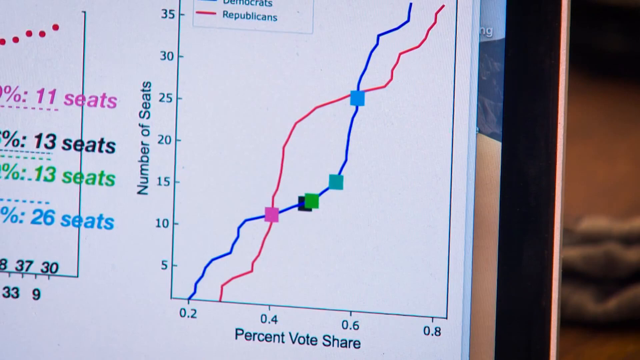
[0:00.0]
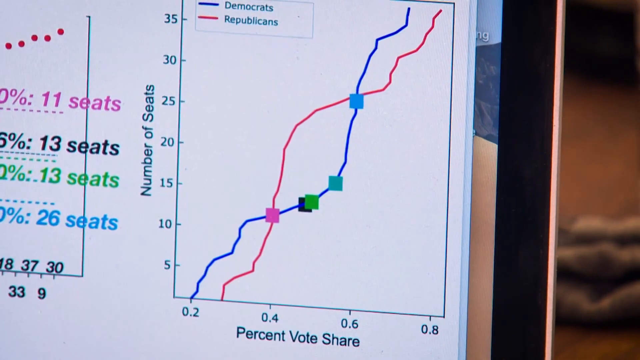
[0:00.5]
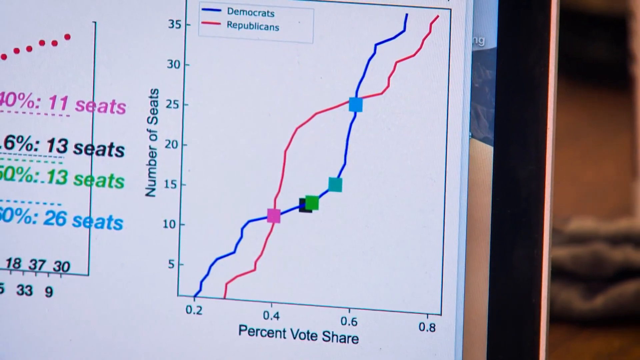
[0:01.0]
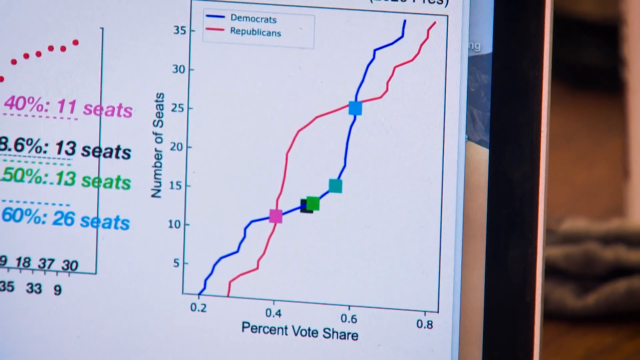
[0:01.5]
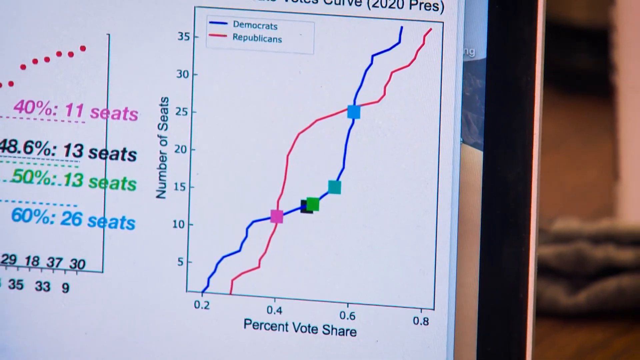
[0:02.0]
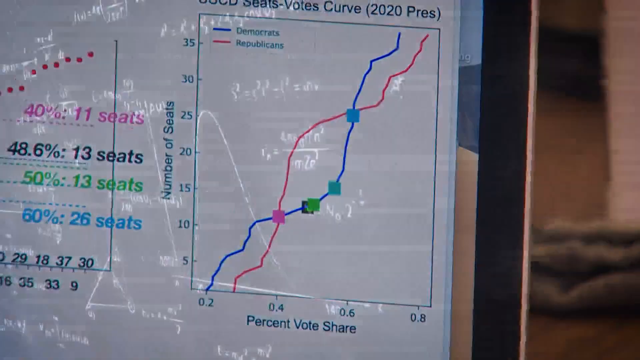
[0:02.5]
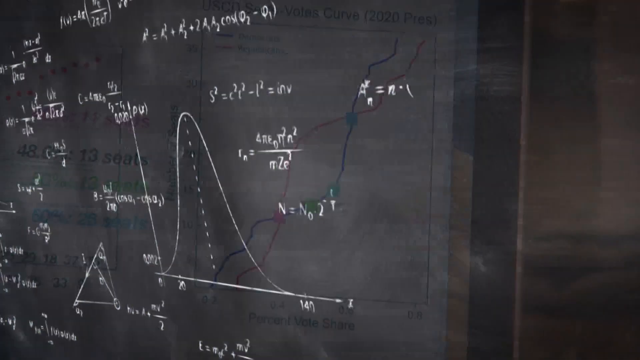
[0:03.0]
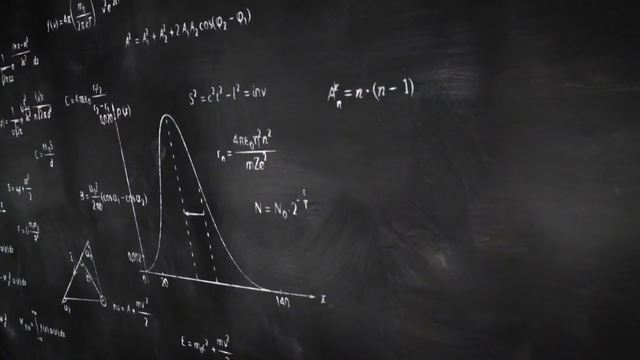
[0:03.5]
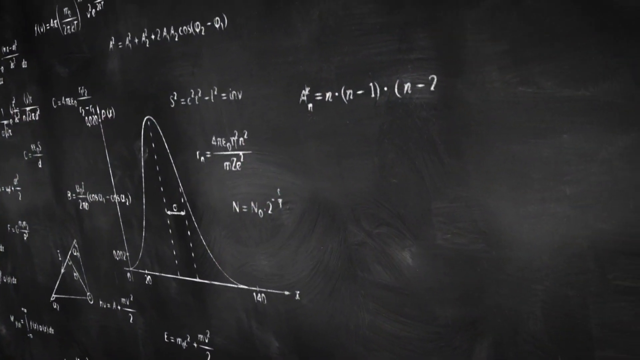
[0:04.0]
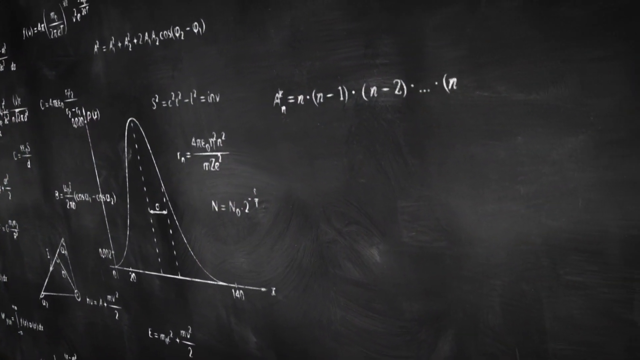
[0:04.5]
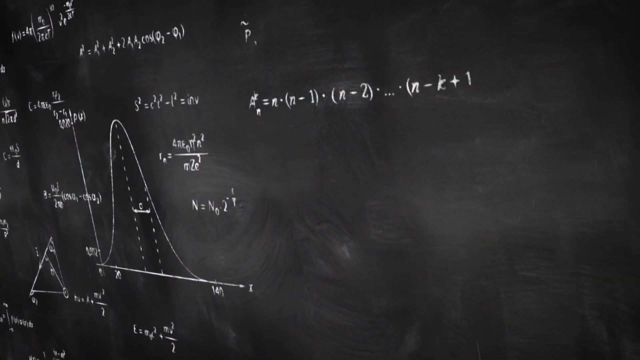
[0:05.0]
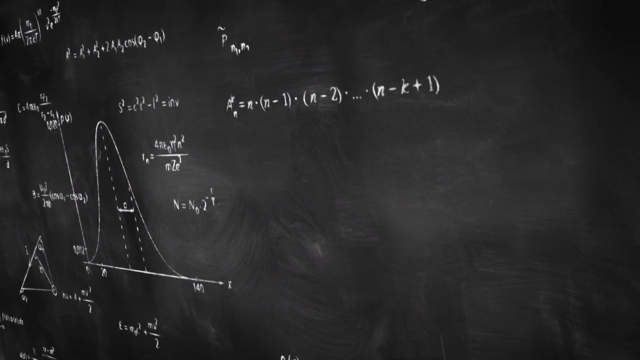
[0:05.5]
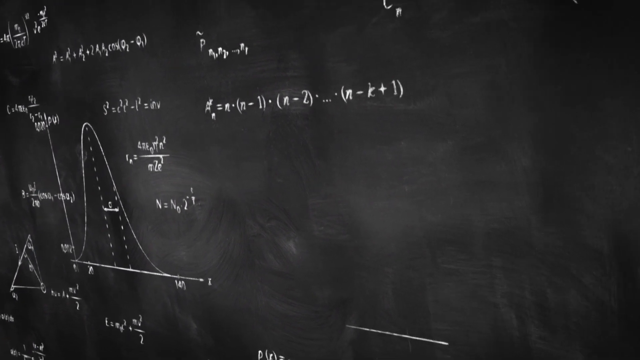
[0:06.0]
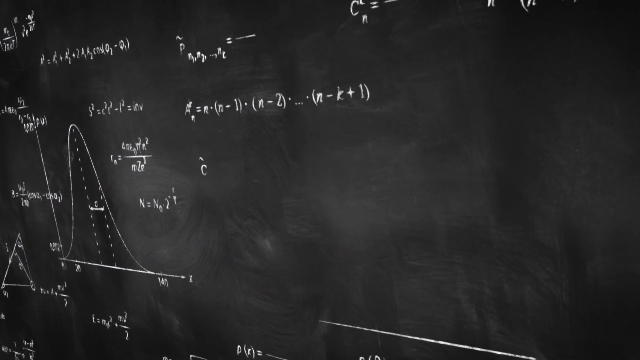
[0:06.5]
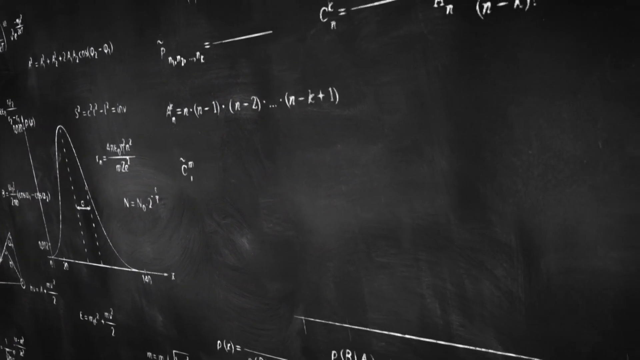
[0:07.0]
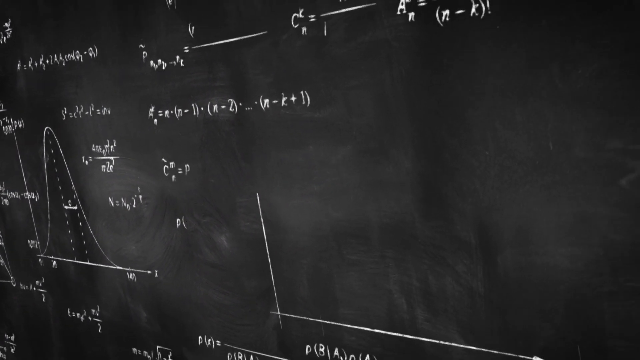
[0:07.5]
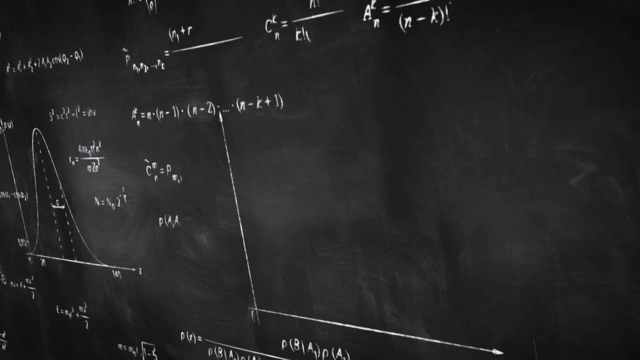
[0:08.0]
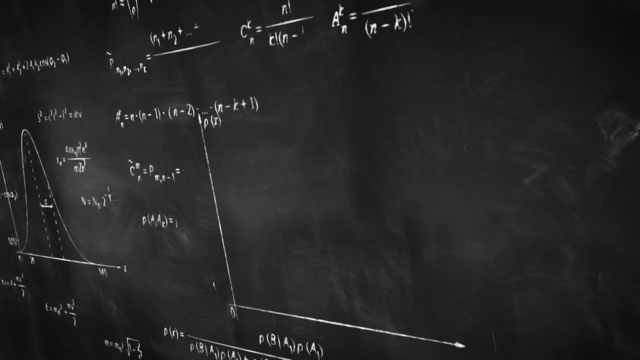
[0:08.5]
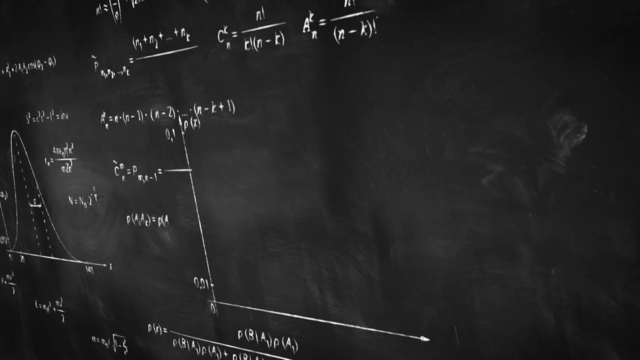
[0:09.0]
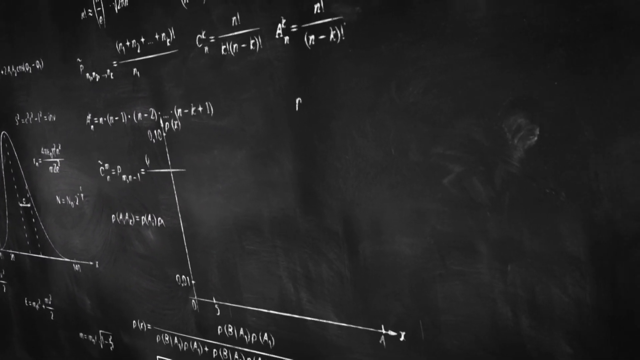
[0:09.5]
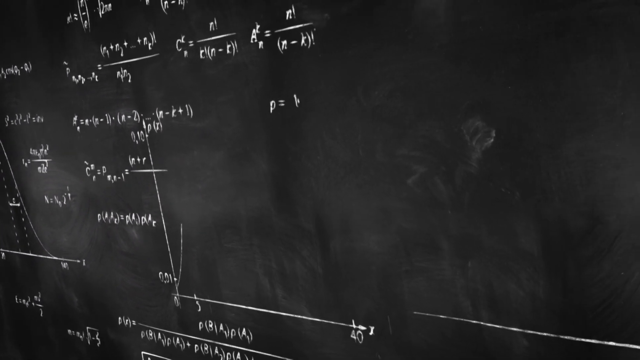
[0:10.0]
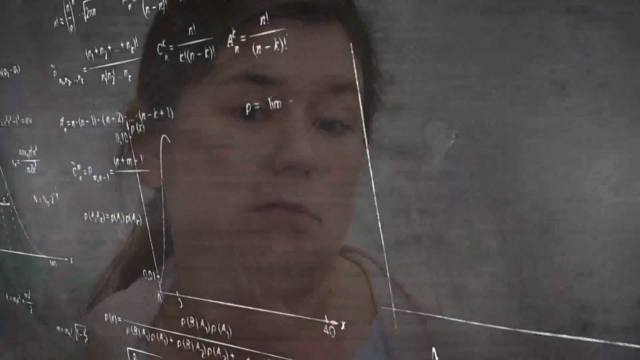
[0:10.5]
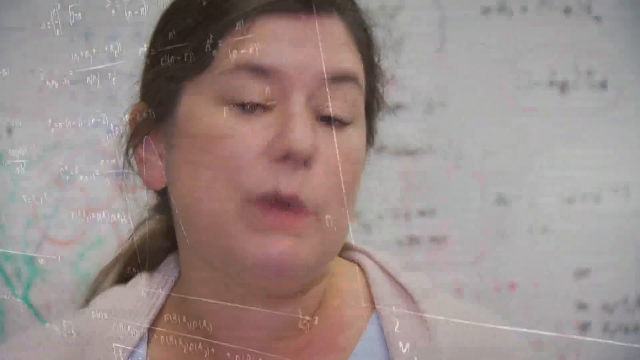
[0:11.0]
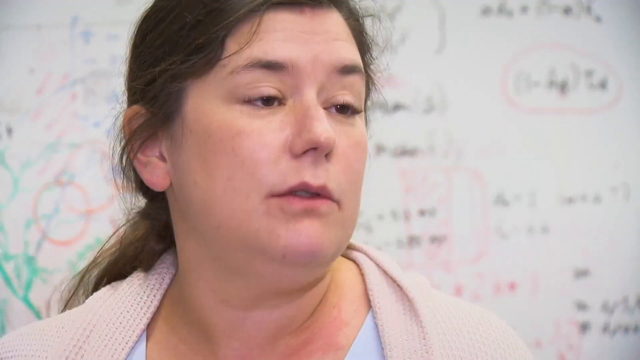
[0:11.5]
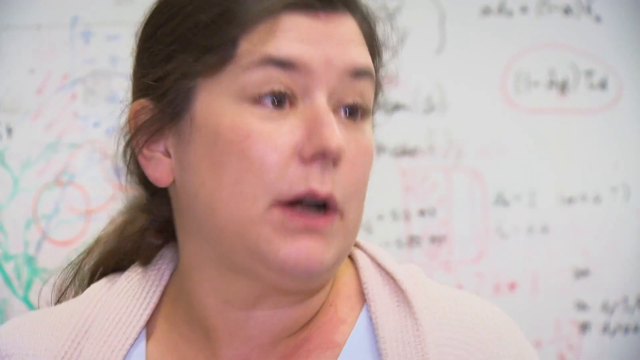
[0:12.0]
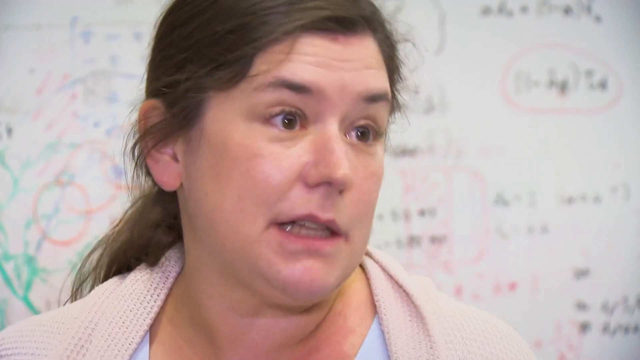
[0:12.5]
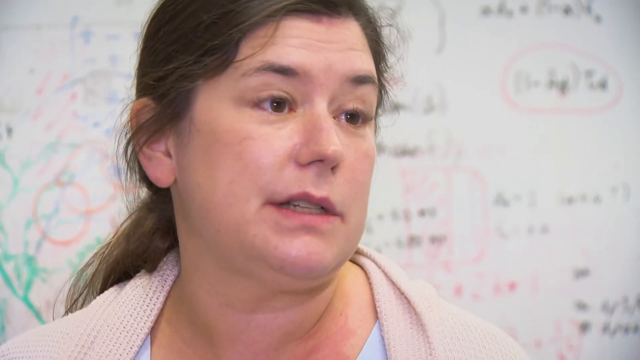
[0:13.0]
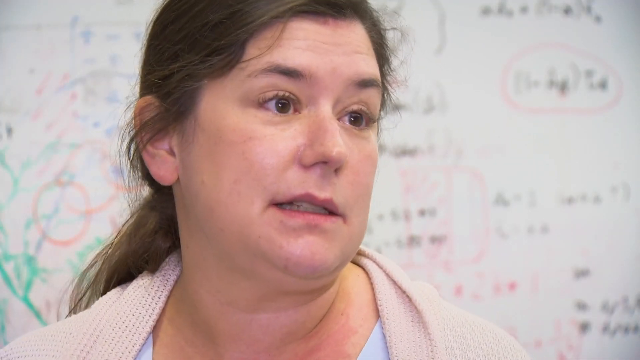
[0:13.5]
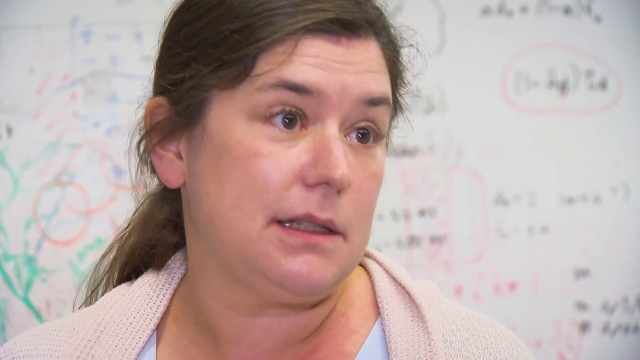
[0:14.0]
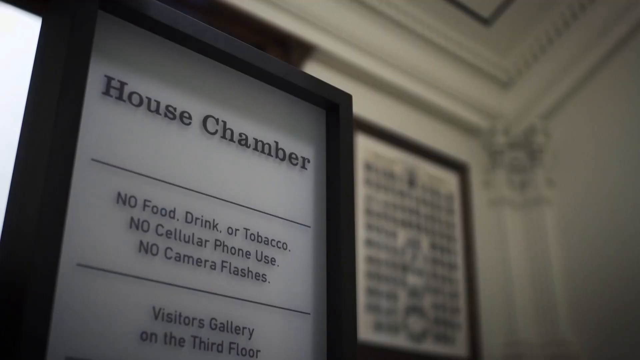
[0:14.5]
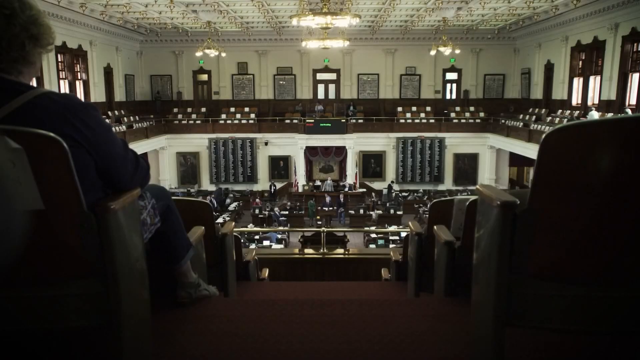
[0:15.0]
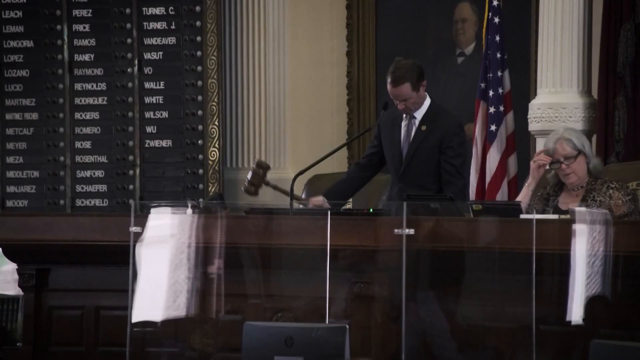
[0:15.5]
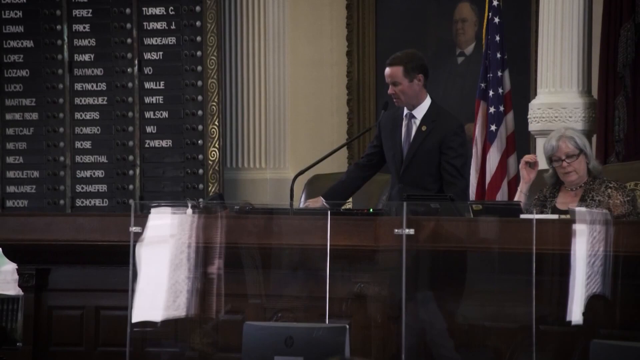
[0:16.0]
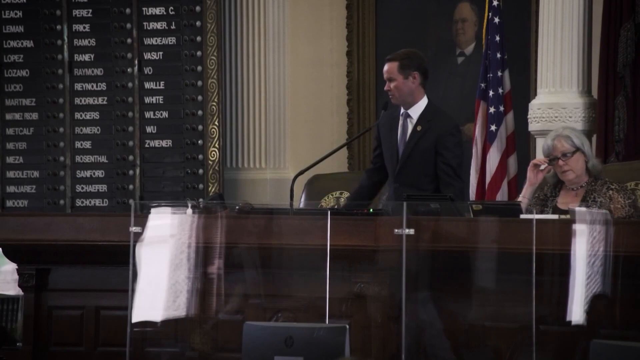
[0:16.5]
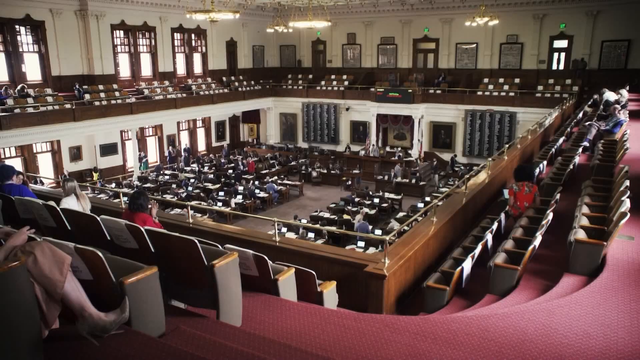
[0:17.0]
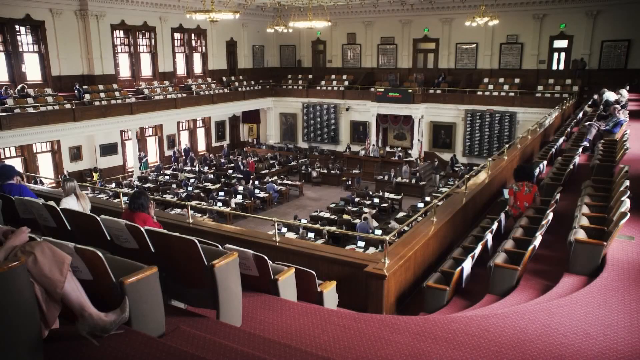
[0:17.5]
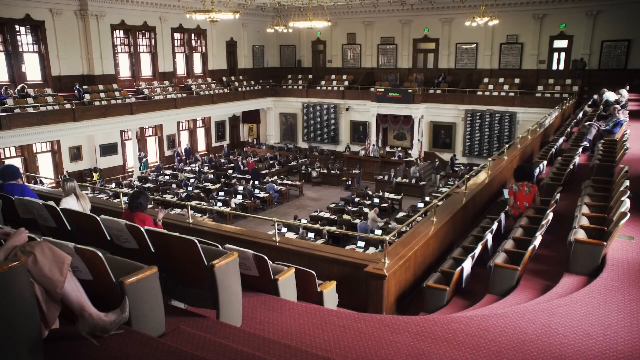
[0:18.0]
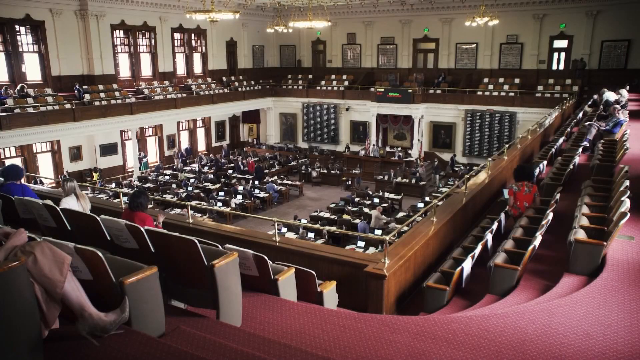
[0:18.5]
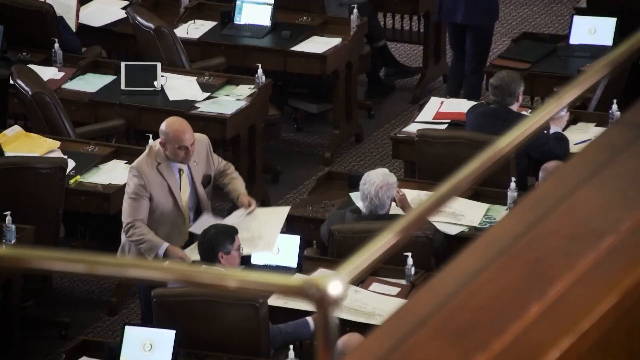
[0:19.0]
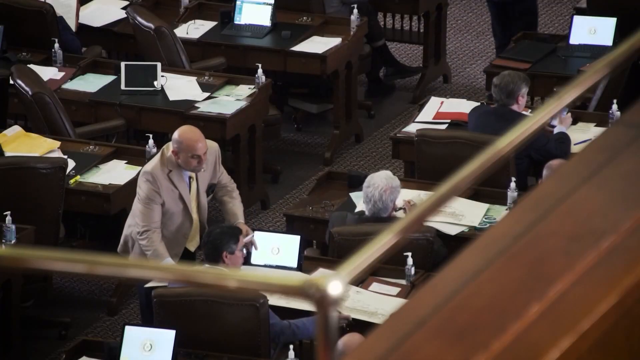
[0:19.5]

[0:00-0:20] The video begins with an angled view of a document on a laptop. It then moves to a blackboard where items are being filled in with chalk; the chalkboard displays math equations. A teacher in a classroom appears next, followed by a shot of Texas House Speaker Dan Phelan and the Texas House. It appears to be a news segment about education and something to do with a Texas House bill. The teacher is being interviewed and looks off to the right, so the interviewer is apparently off to the right, while the person recording the interview seems to be in the center. On the computer screen, the document shows a line graph with red lines for Republicans and blue lines for Democrats, showing Democrats performing better than Republicans.